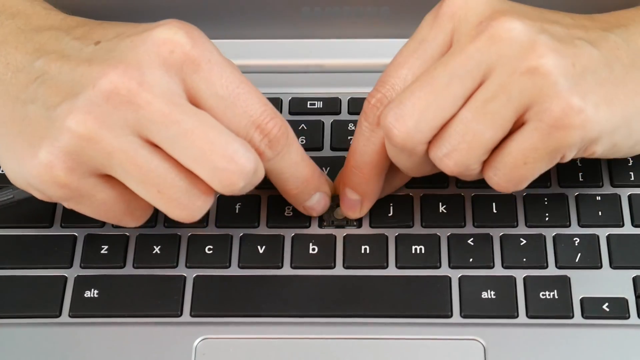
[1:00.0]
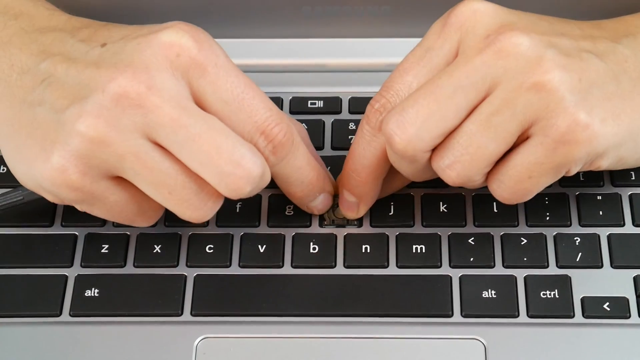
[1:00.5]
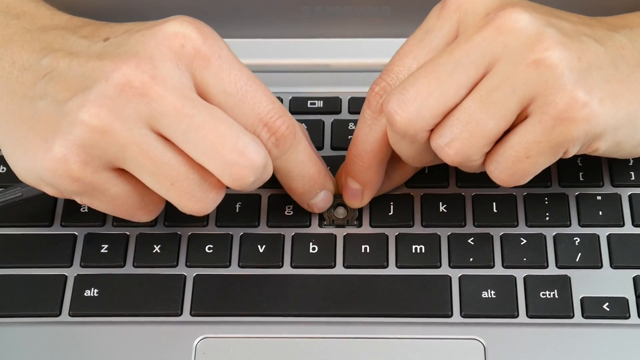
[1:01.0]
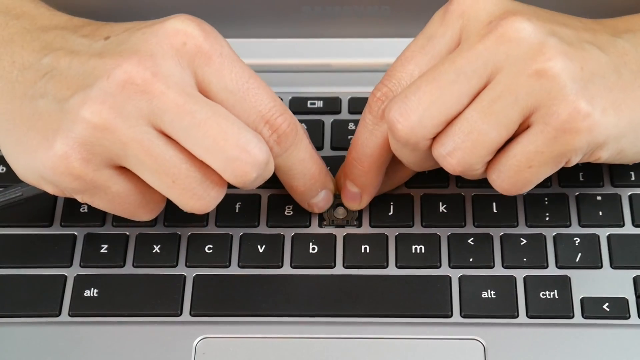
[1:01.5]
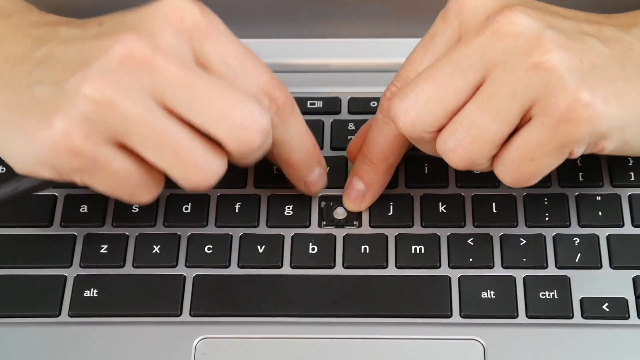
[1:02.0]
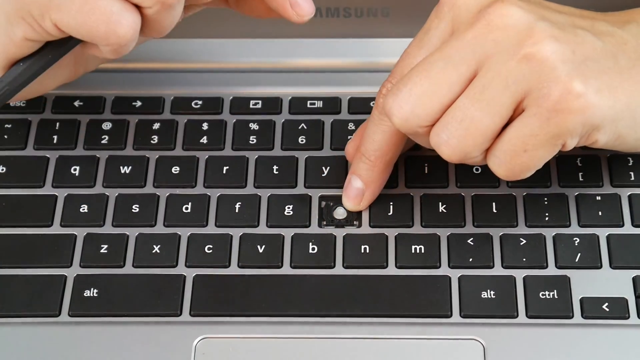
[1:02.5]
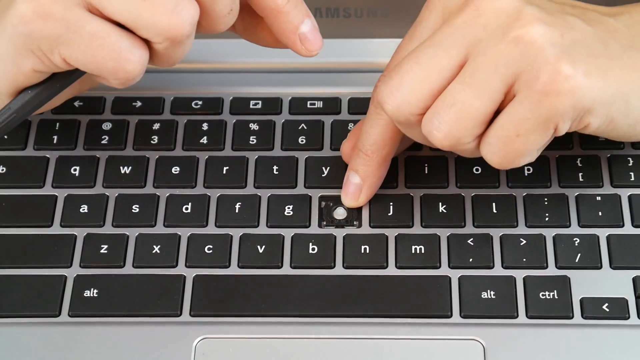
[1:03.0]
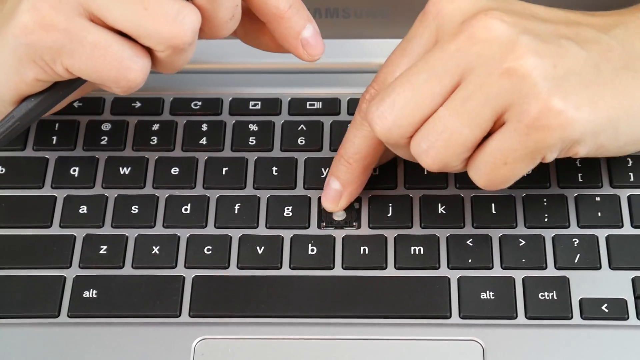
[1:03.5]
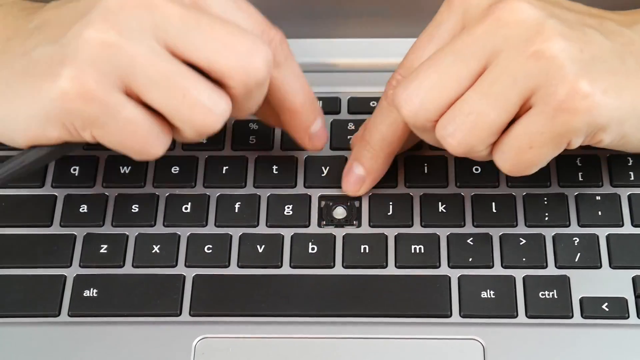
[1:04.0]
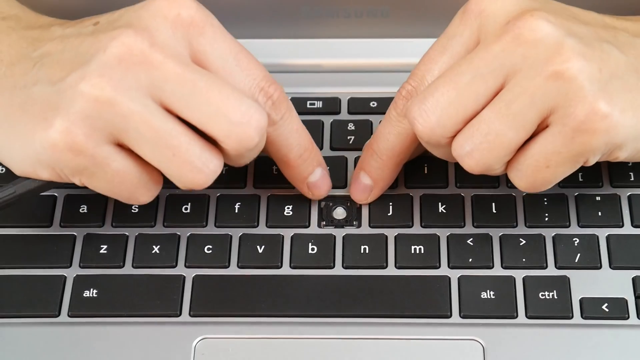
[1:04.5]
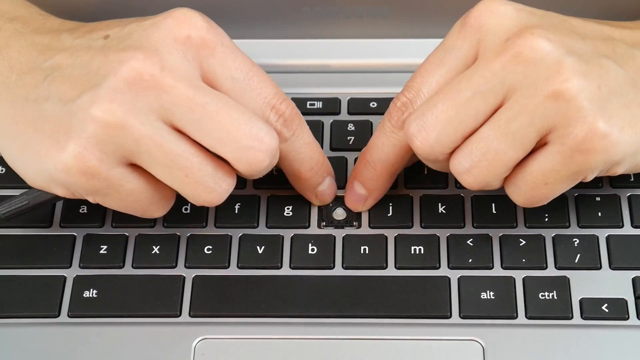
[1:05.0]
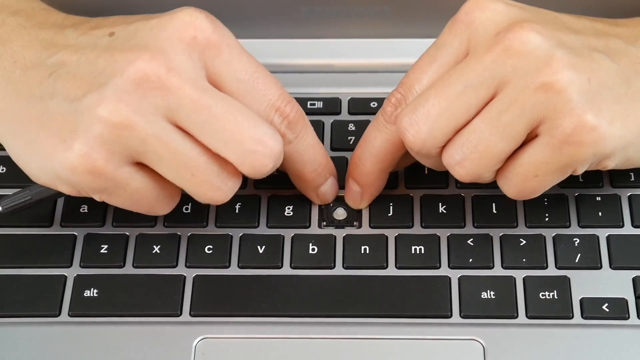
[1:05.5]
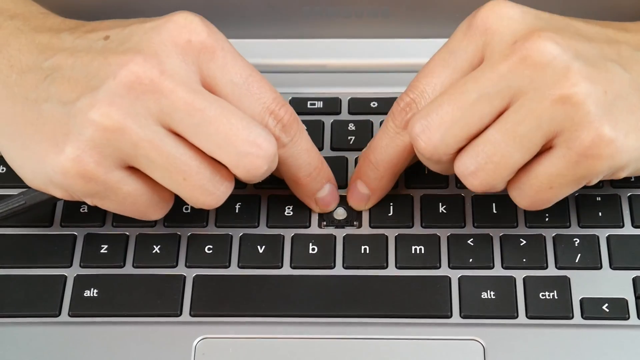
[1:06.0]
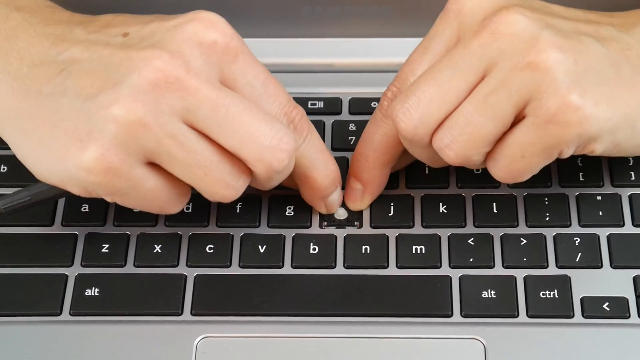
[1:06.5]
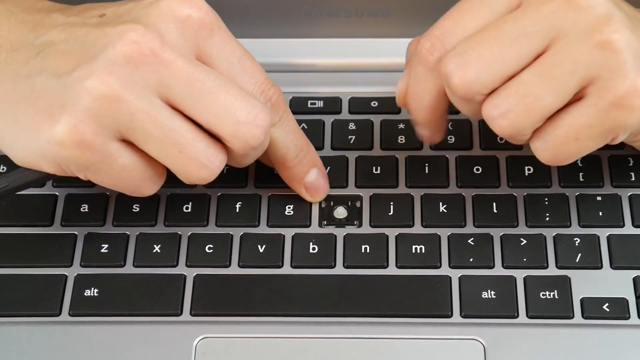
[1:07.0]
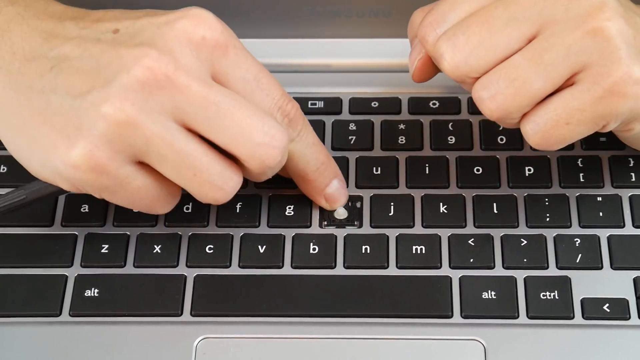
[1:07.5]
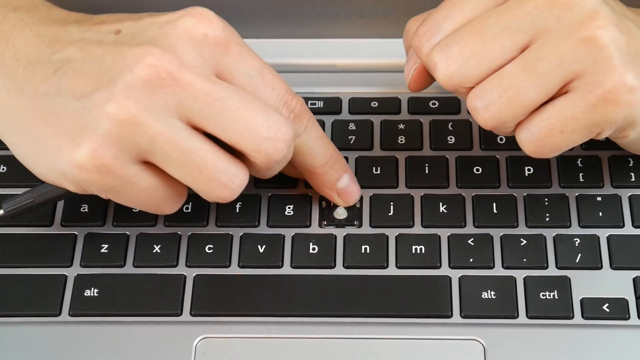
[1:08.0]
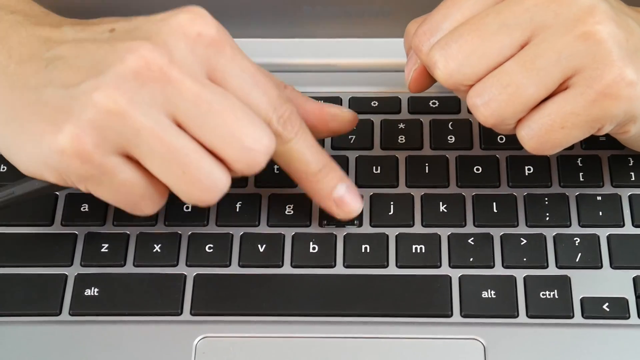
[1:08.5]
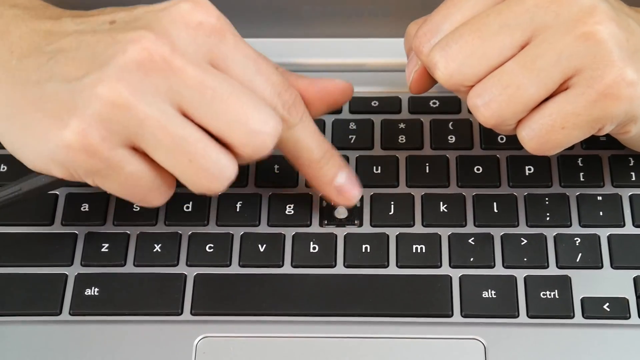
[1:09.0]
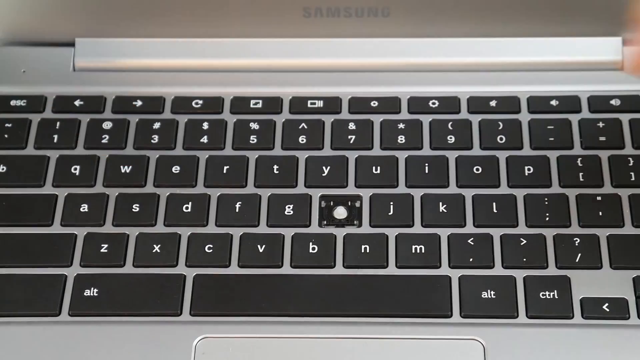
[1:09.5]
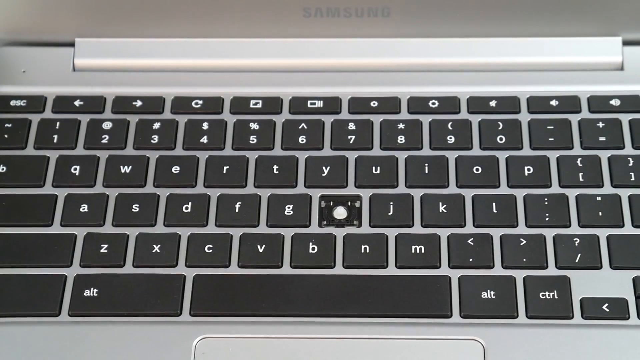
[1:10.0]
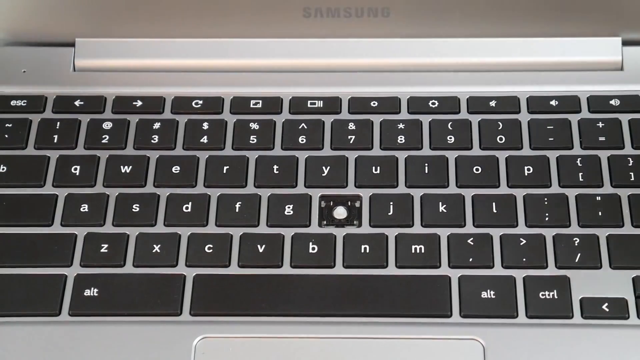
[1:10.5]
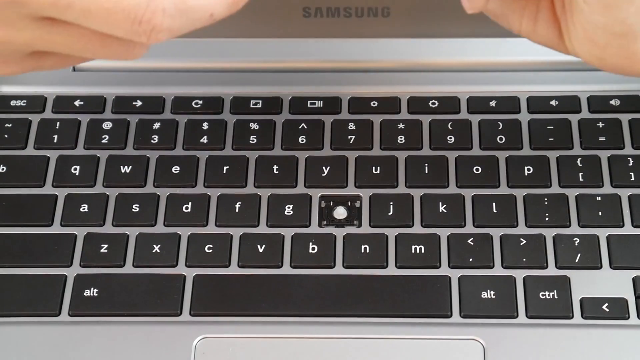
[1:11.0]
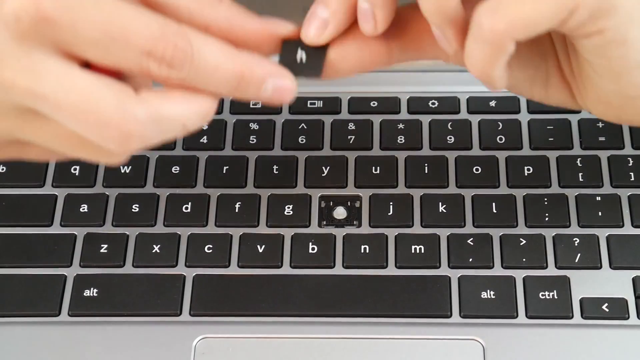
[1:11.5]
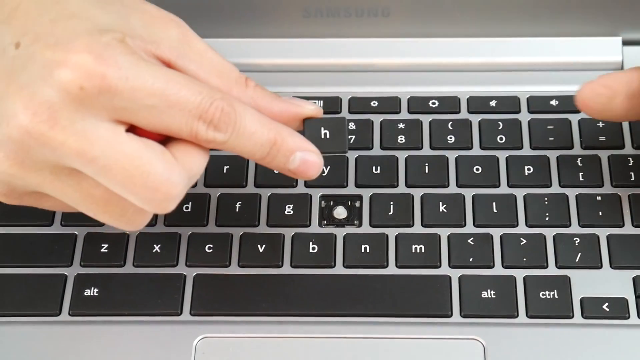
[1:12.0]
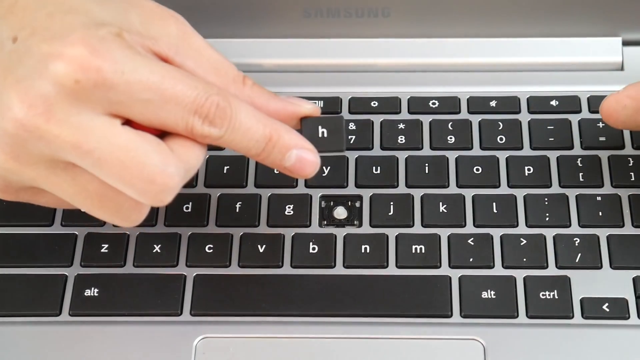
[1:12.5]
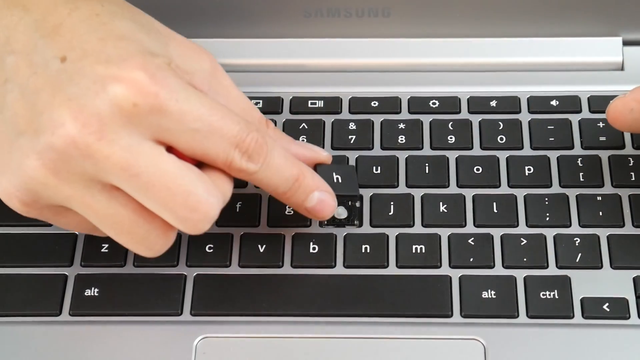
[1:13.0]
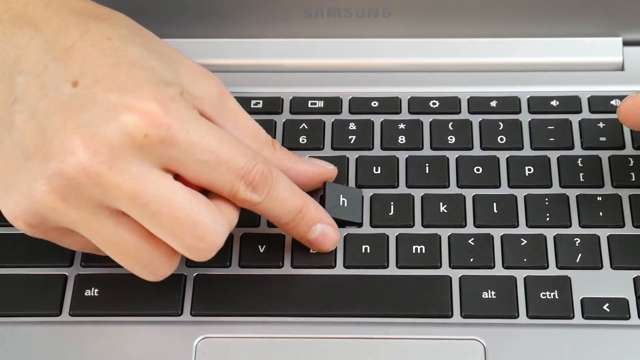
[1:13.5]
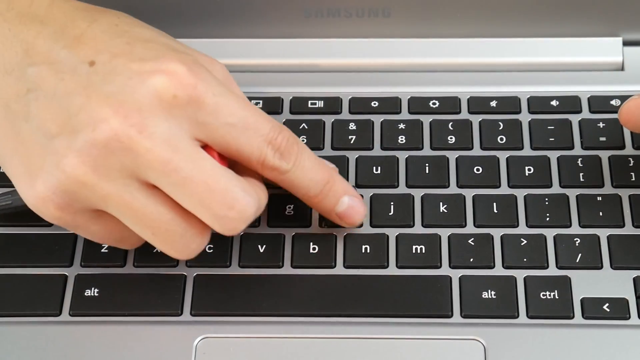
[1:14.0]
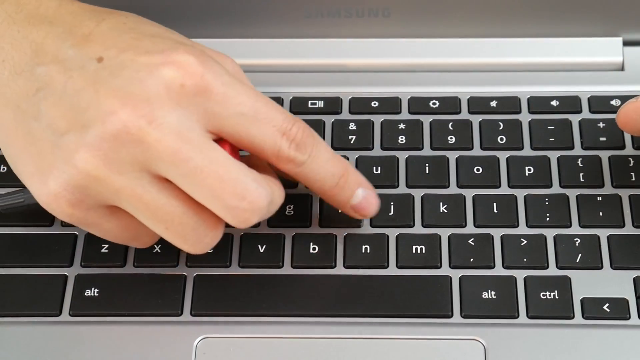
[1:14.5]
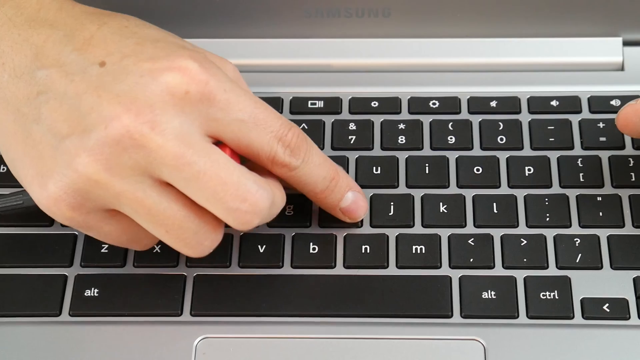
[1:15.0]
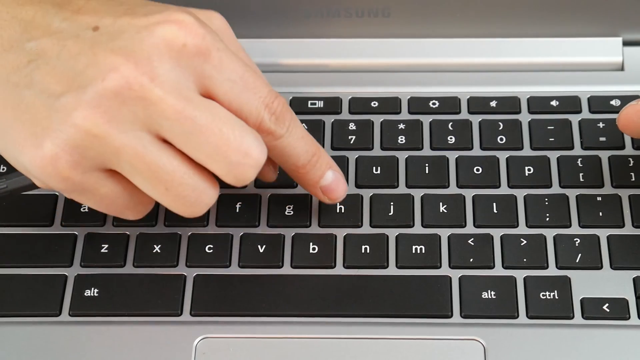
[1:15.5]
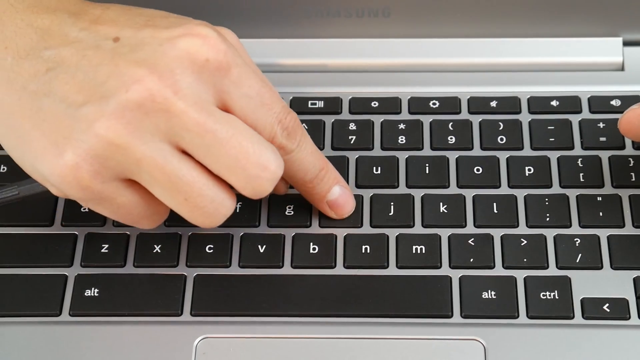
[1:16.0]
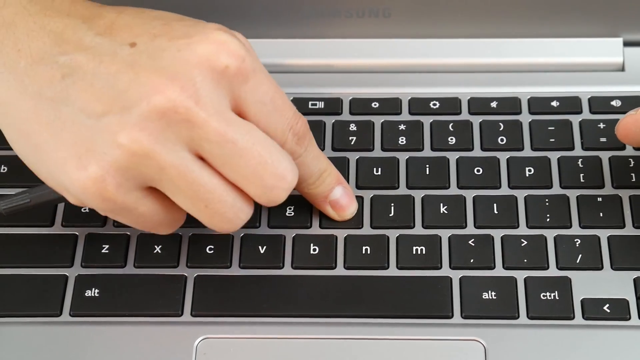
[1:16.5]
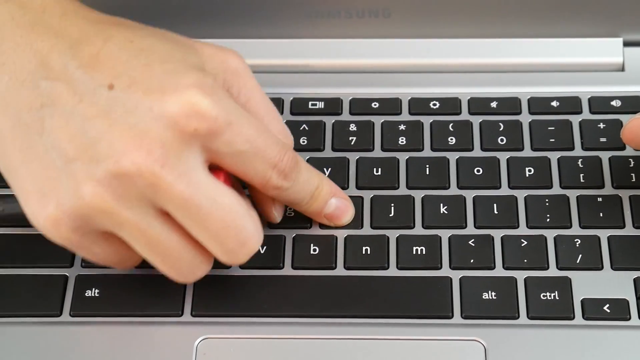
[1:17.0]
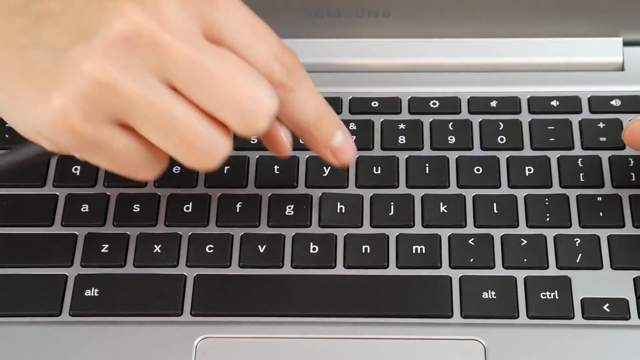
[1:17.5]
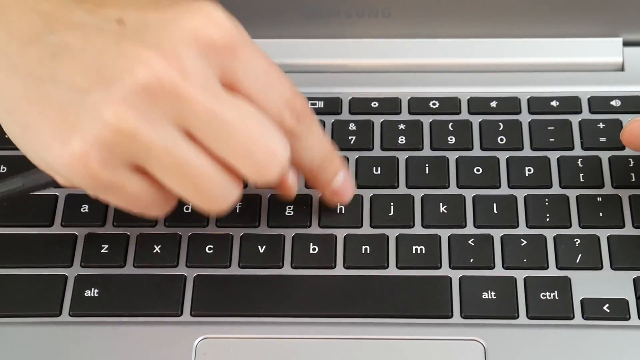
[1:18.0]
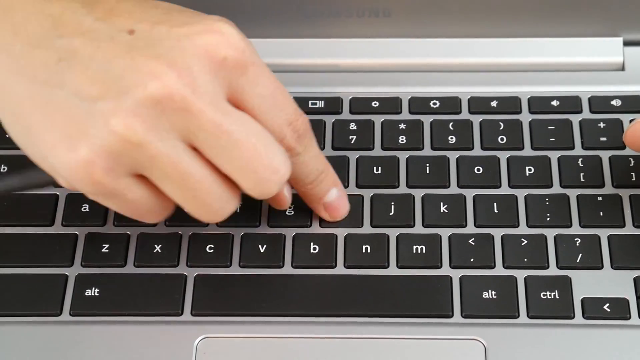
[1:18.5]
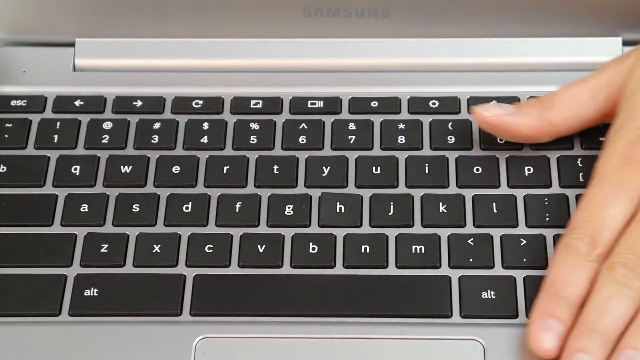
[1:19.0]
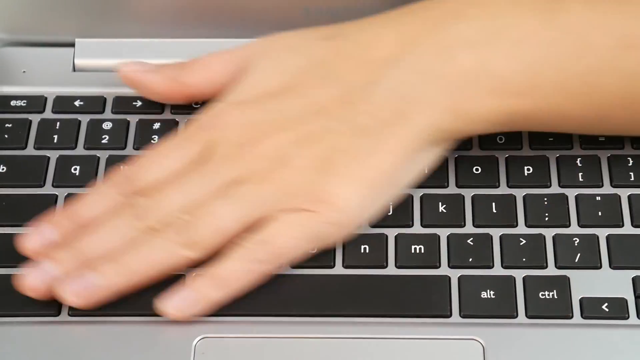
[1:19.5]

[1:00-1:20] He no longer has the screwdriver-like tool. His two hands hold each side of the black plastic piece and put it back into the slot where the H key was, kind of pressing it in with both pointer fingers, then with just one. He grabs the H key and presses it in with one hand, which looks like it is probably his left hand from the viewer's vantage point, pressing it down several times with the pointer finger. Then he kind of moves the palm of his other hand back and forth along the keyboard area. The H key is back in place; the area does not appear to have been cleaned.